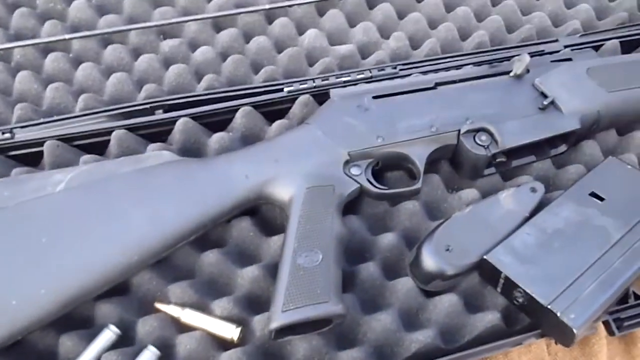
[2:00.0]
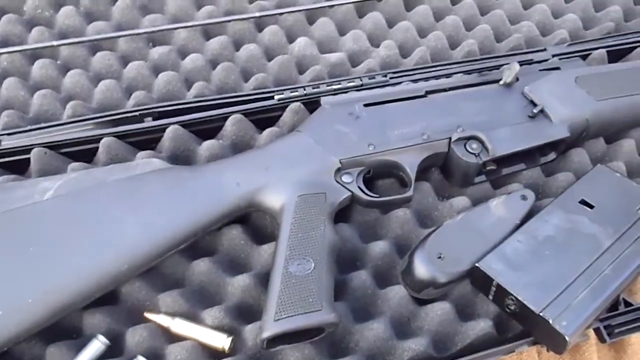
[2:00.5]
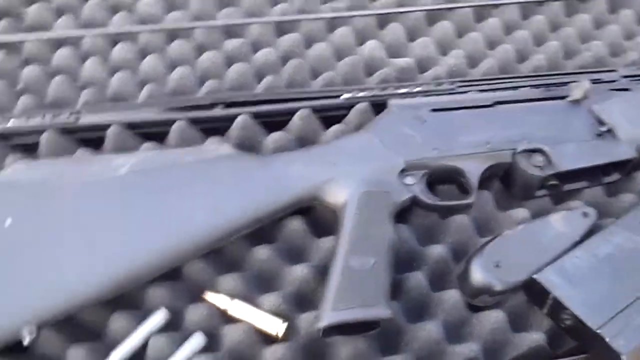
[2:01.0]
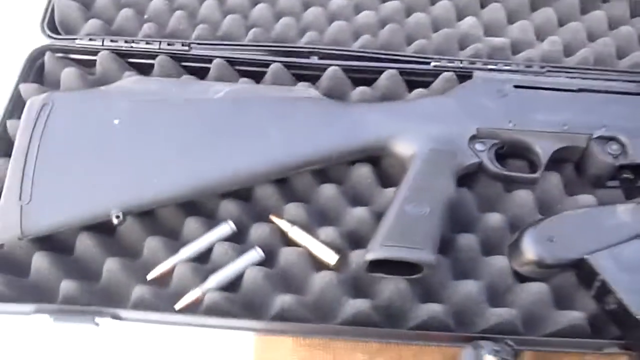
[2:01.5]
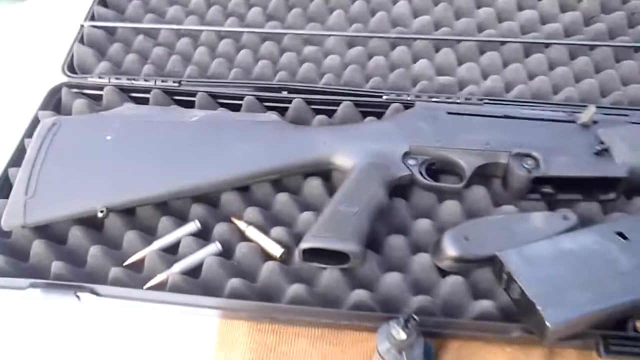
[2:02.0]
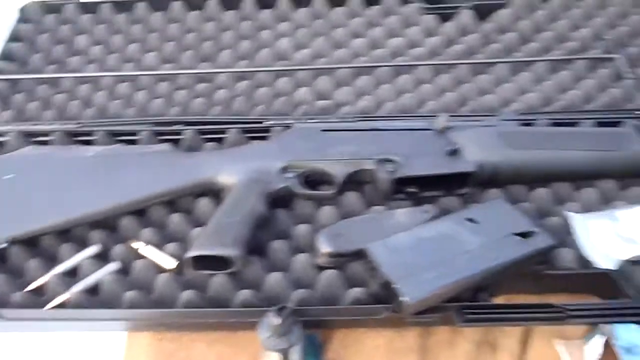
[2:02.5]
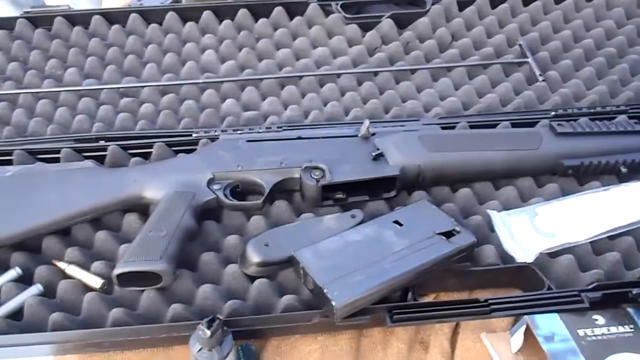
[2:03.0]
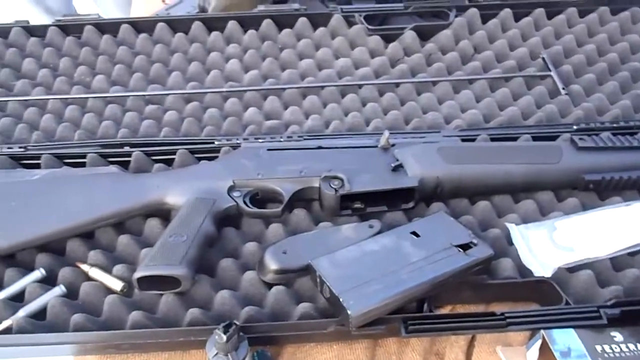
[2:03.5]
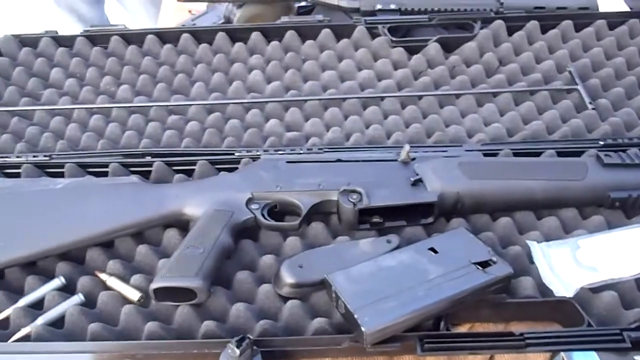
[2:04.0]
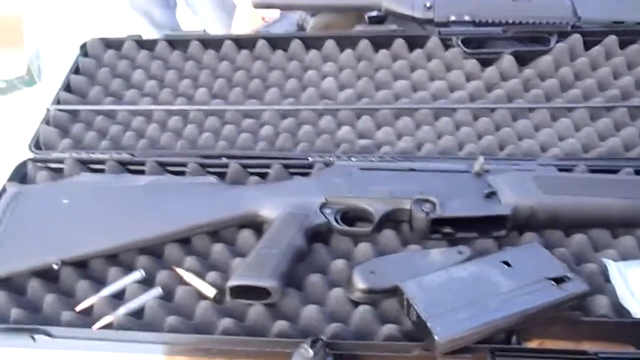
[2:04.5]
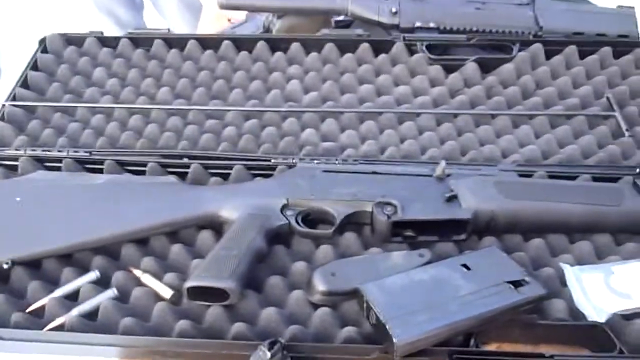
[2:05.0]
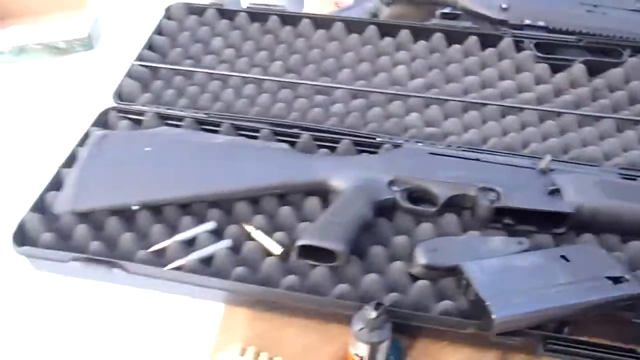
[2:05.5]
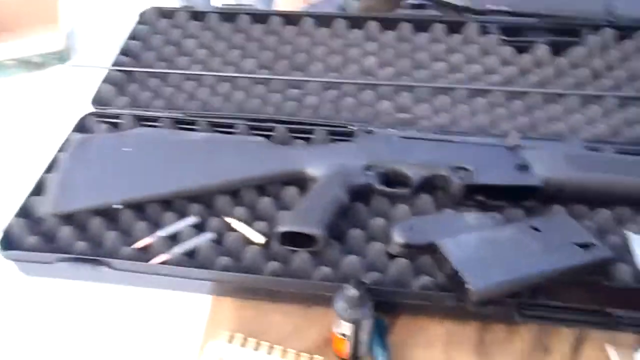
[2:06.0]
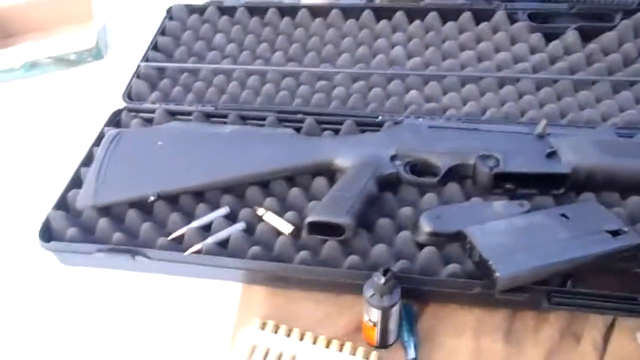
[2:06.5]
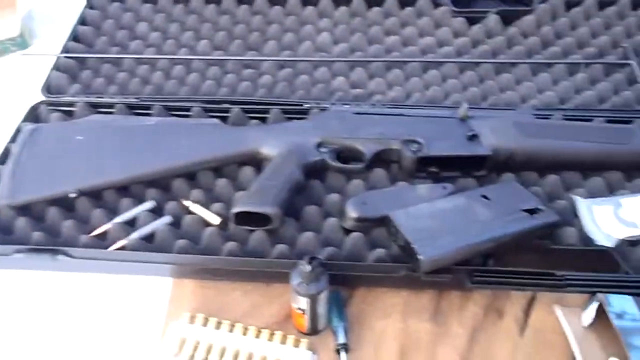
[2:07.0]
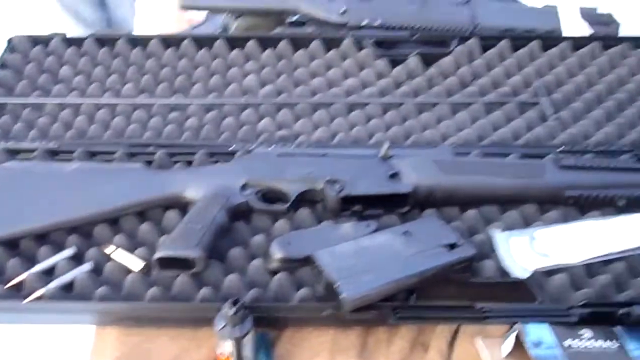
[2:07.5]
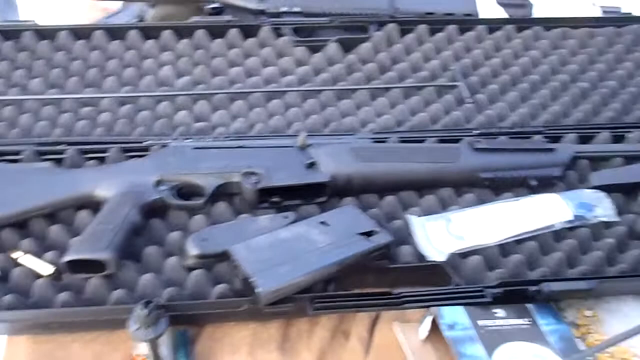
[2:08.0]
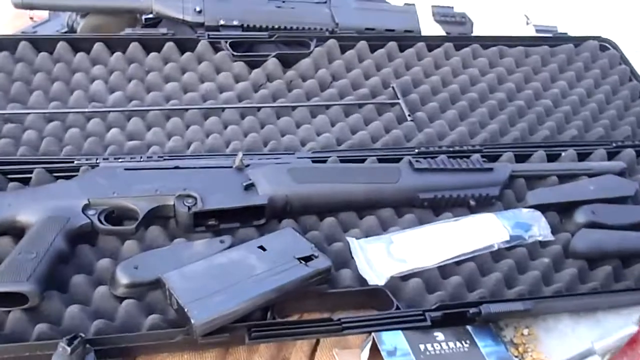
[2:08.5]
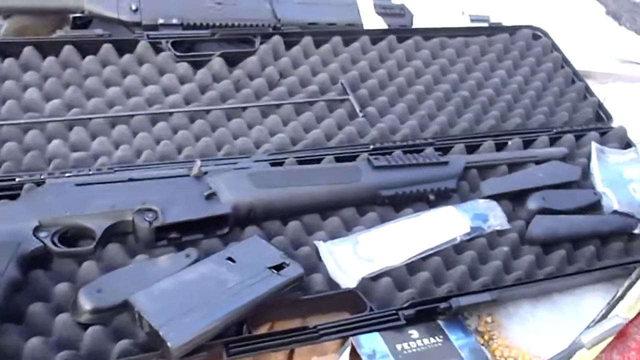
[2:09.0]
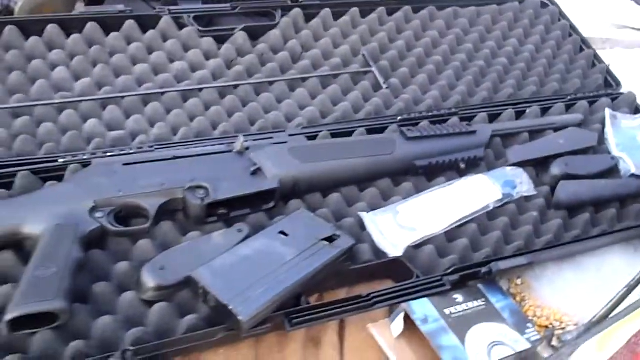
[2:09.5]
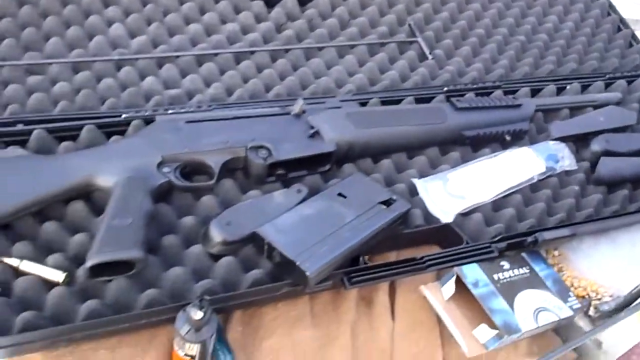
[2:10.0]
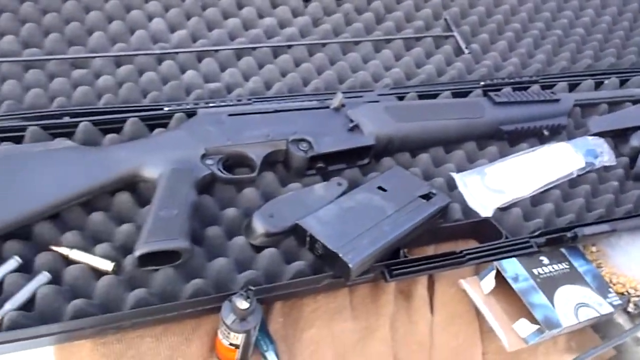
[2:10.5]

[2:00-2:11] Multiple rounds of ammunition lay next to the black firearm, with multiple pieces of equipment near it. The man backs out a casing of ammunition. The video ends abruptly.